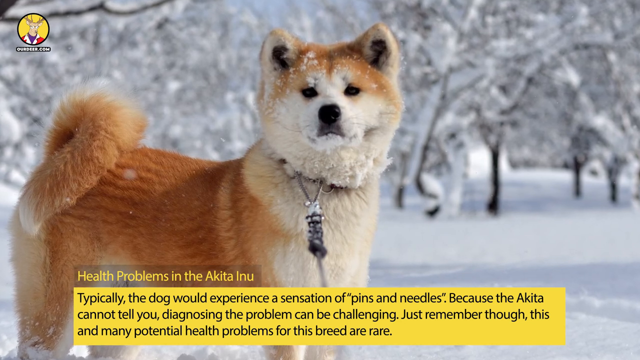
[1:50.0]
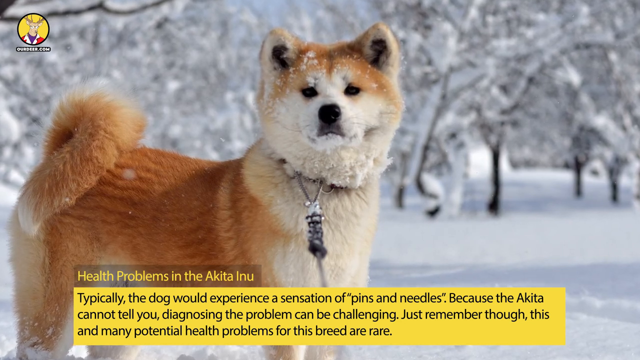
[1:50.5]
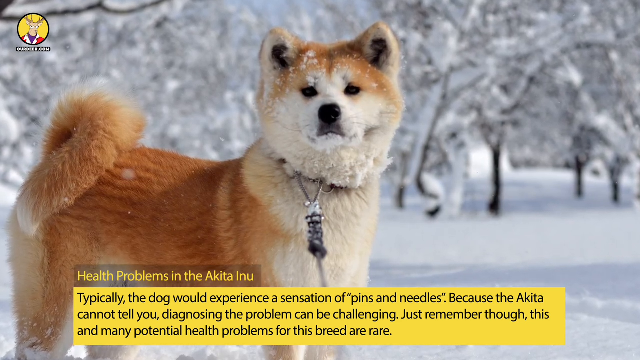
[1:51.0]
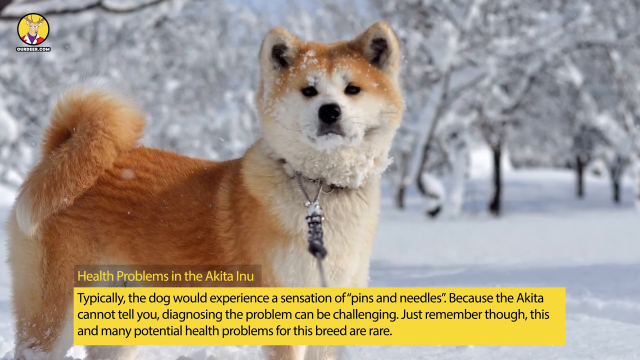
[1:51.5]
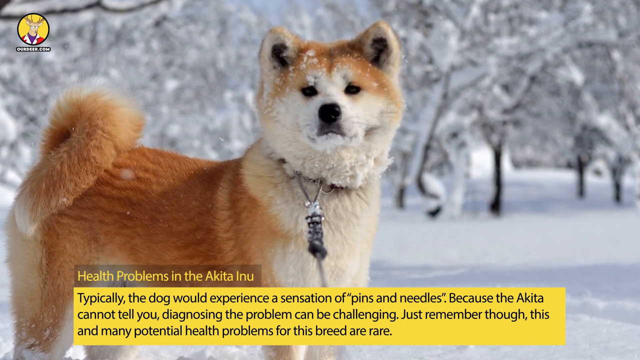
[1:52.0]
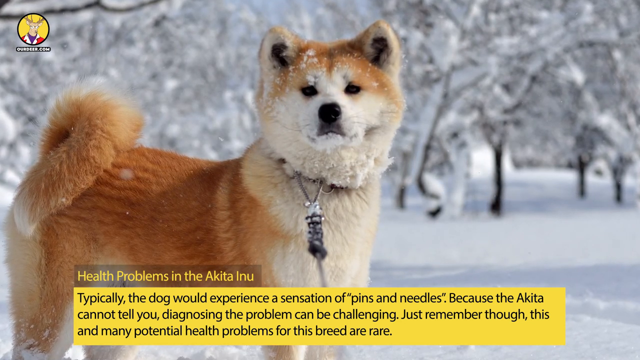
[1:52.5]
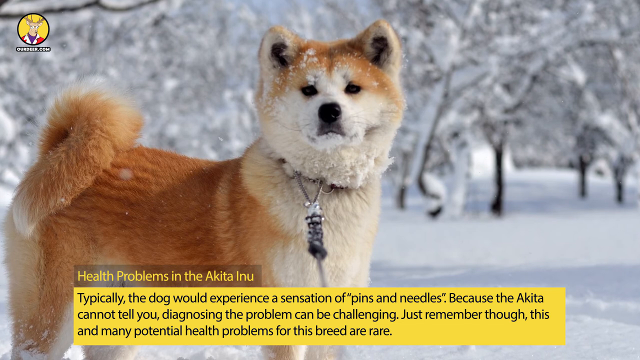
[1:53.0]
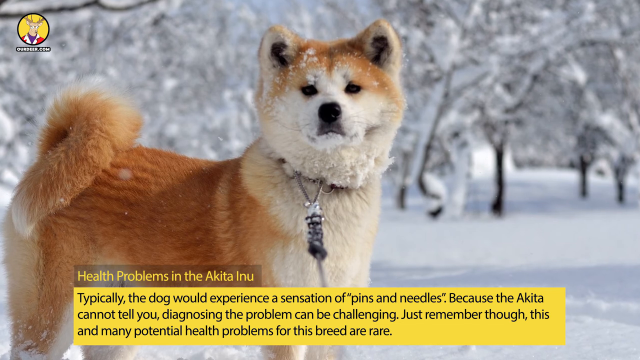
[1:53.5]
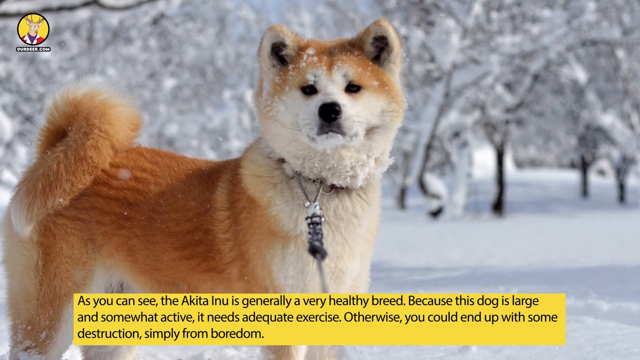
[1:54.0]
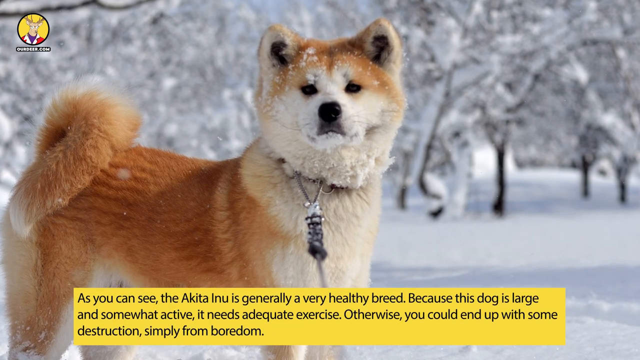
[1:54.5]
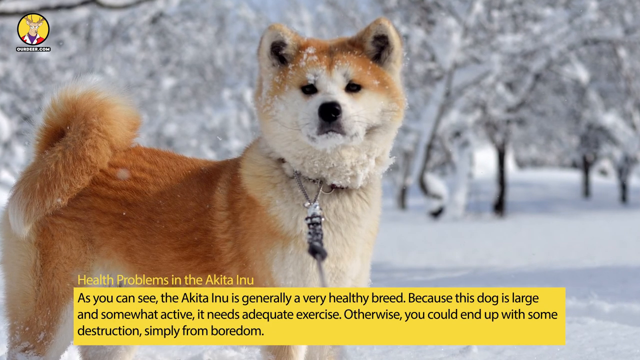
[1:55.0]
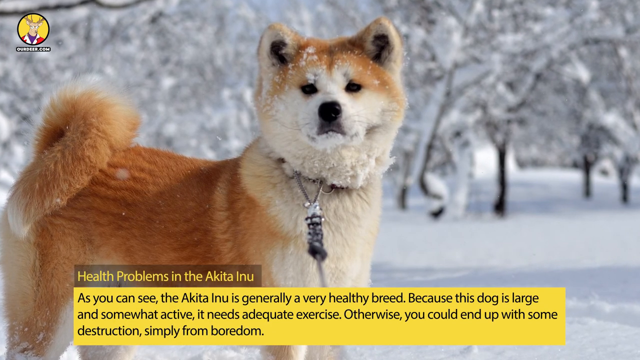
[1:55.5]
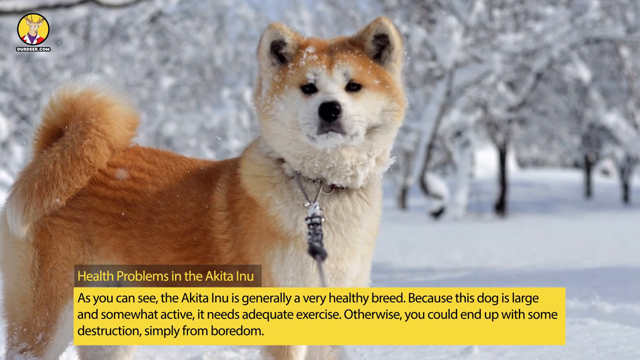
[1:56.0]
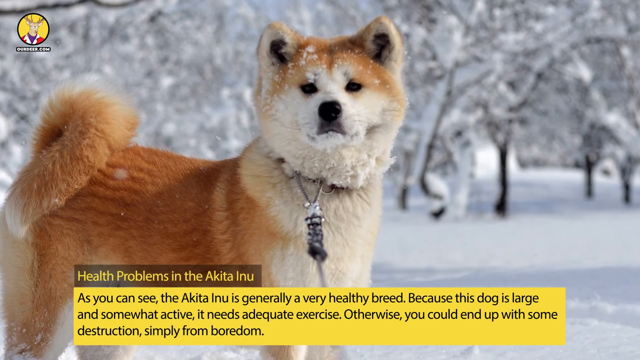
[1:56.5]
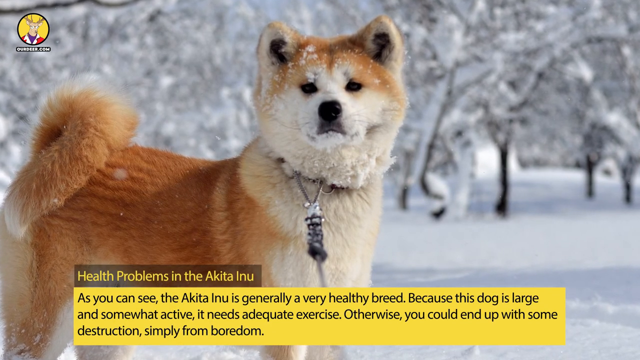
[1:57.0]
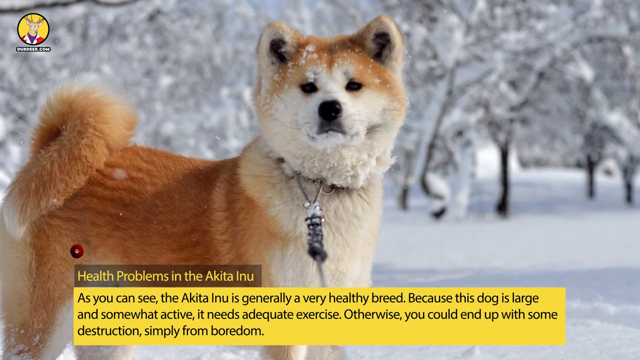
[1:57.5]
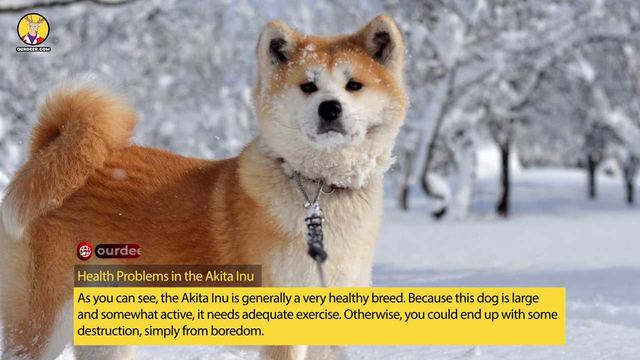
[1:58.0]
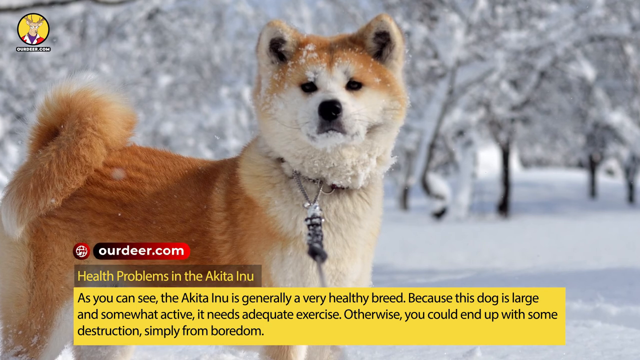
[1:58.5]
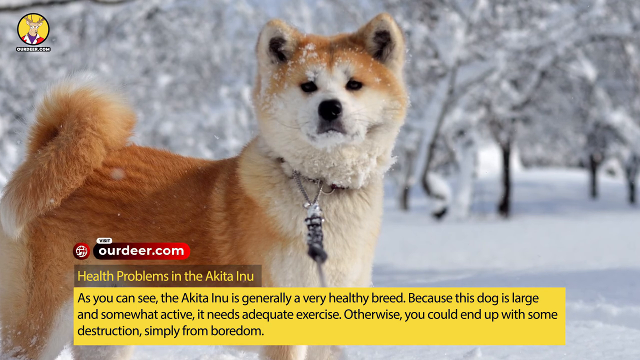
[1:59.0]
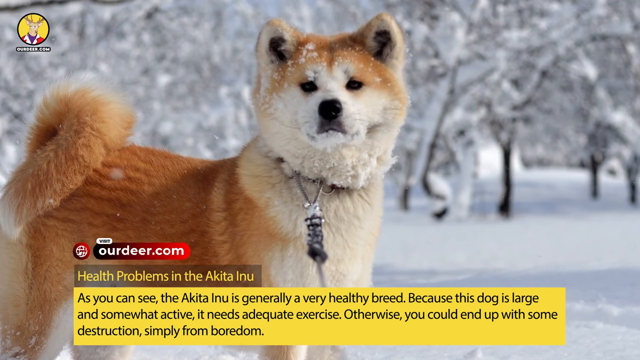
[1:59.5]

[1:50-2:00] The text reads "health problems in the Akita Inu" and "Typically the dog would experience sensations of pins and needles because the Akita cannot tell you diagnosing the problem can be challenging. Just remember though this and many potential health problems for this breed are rare". The view slowly zooms in on the dog in the snow. He is brown and white with a black nose and has a chain on, and there are trees covered in snow in the background.